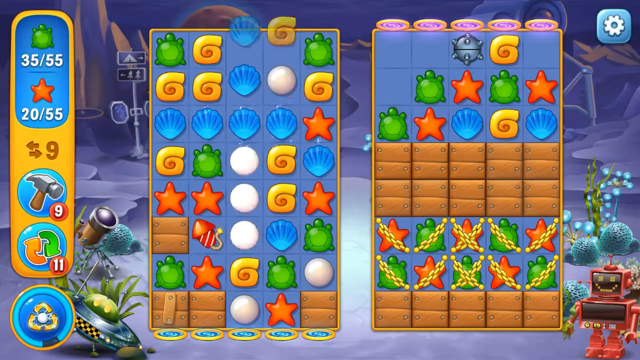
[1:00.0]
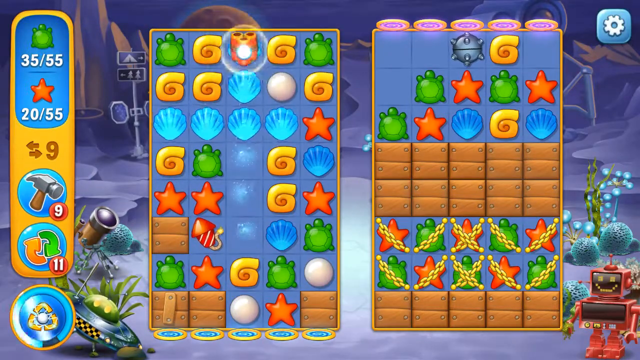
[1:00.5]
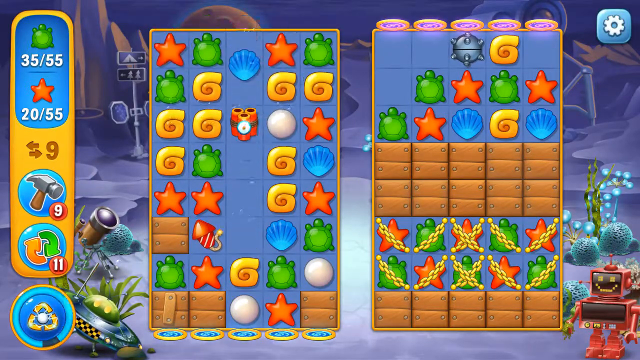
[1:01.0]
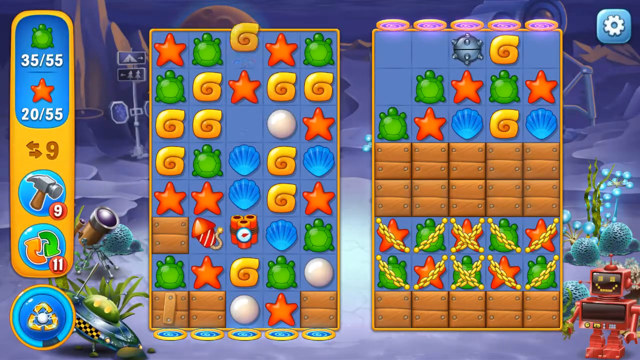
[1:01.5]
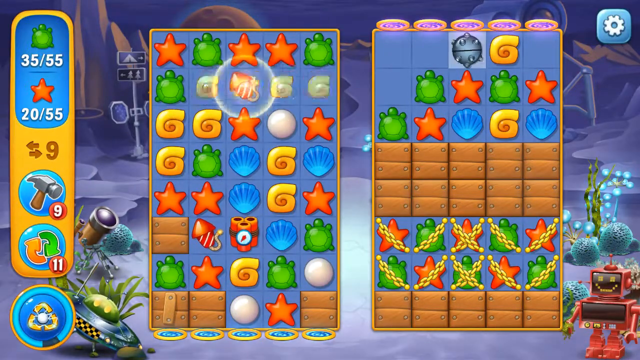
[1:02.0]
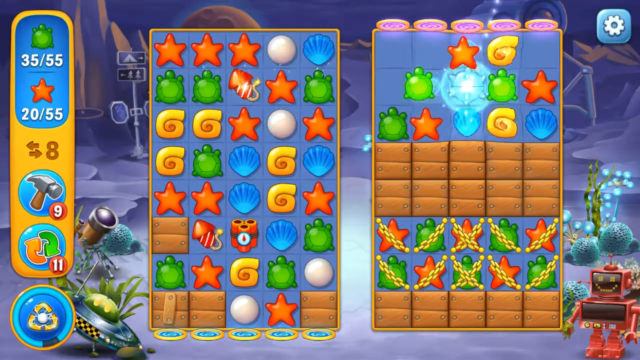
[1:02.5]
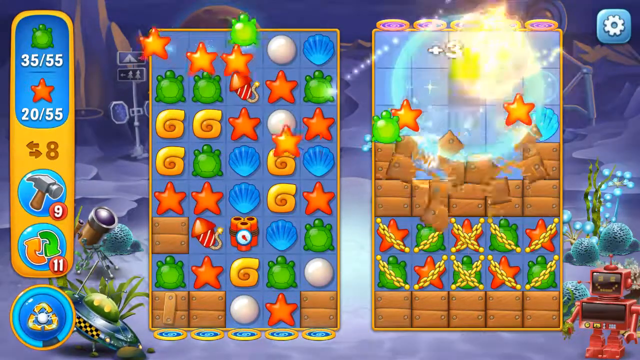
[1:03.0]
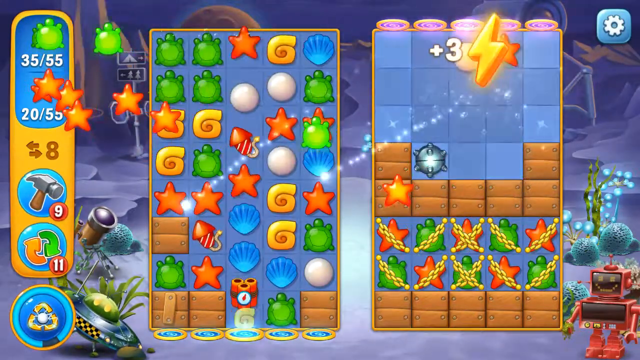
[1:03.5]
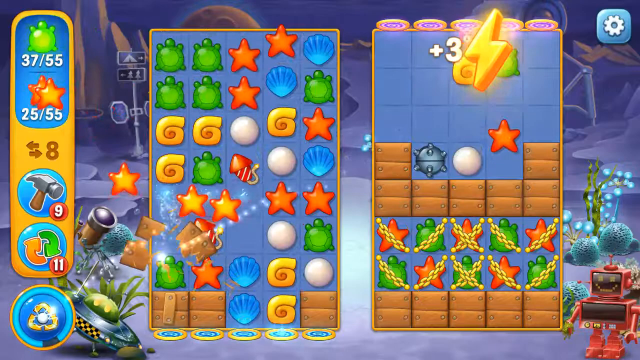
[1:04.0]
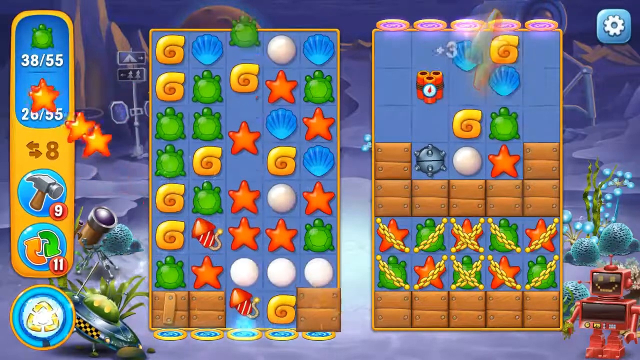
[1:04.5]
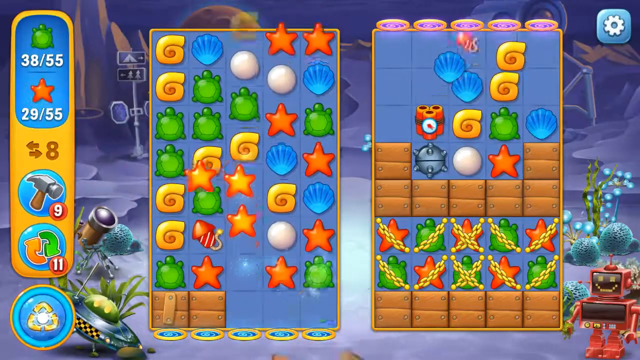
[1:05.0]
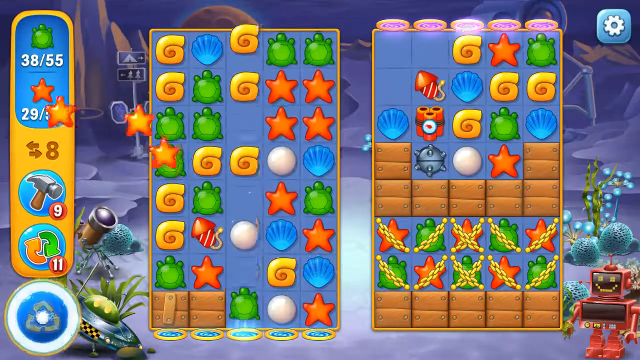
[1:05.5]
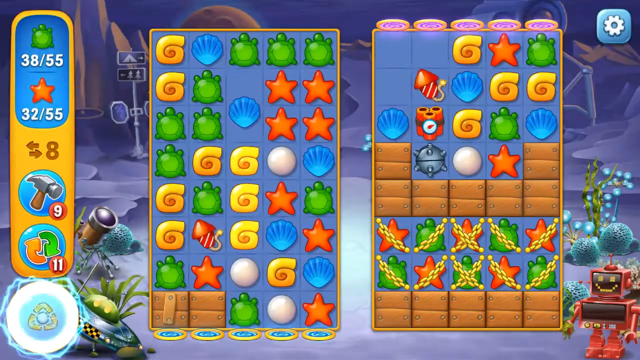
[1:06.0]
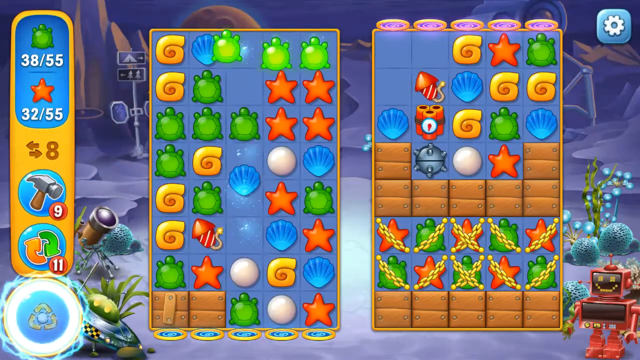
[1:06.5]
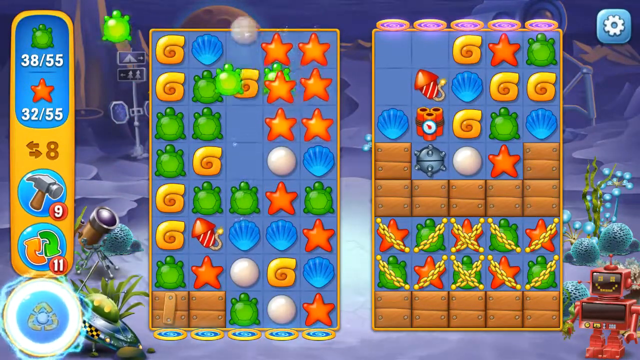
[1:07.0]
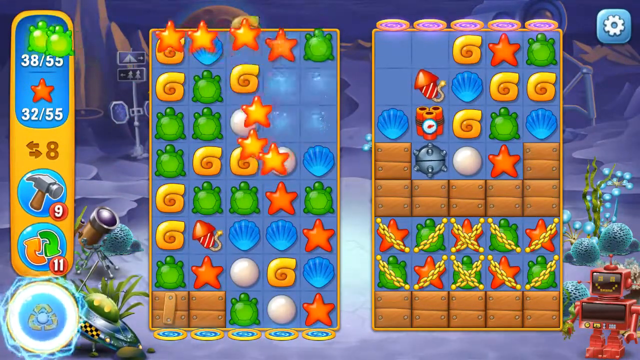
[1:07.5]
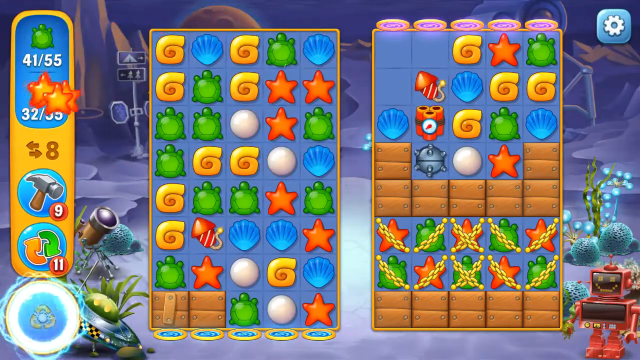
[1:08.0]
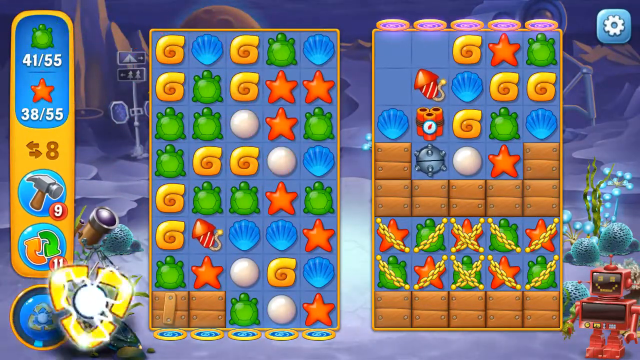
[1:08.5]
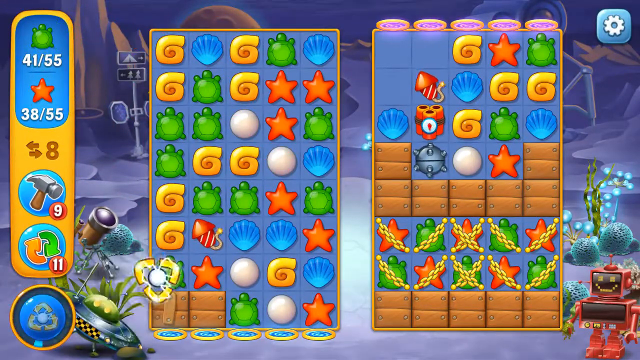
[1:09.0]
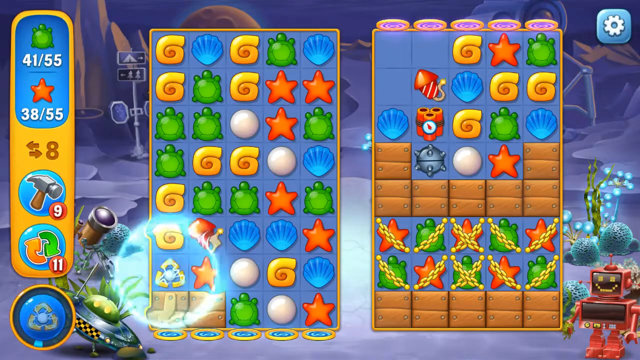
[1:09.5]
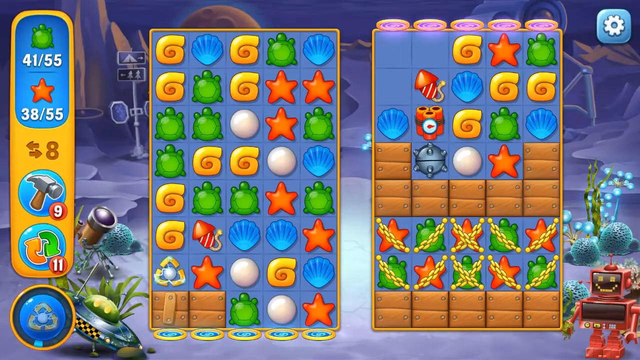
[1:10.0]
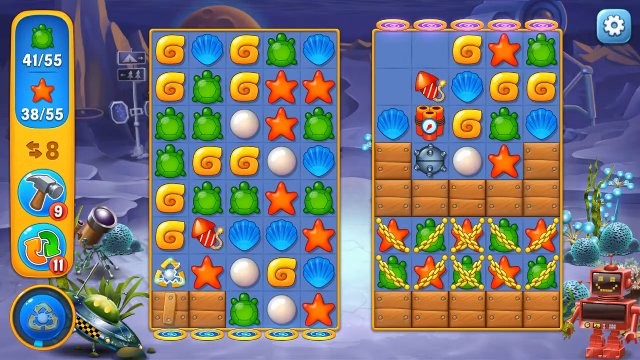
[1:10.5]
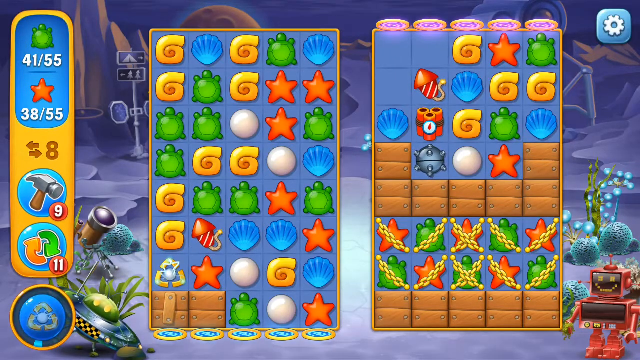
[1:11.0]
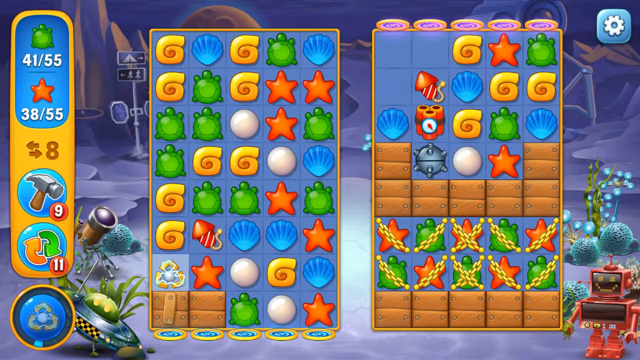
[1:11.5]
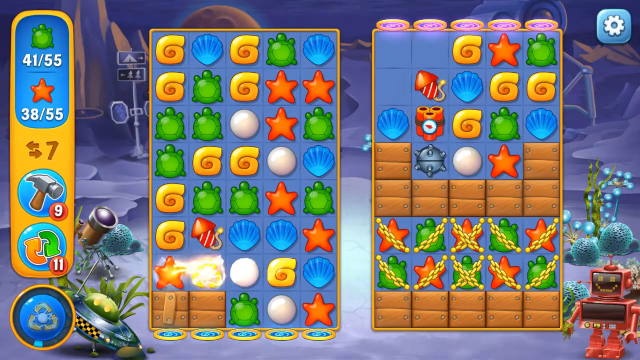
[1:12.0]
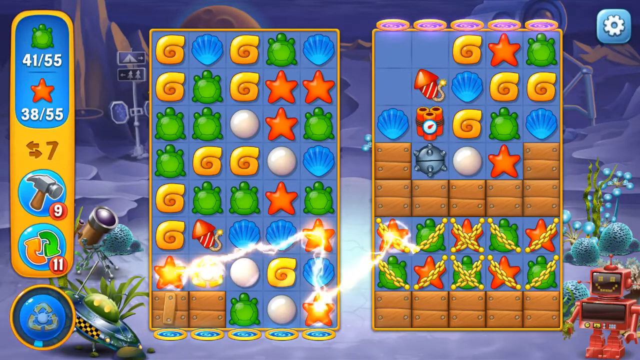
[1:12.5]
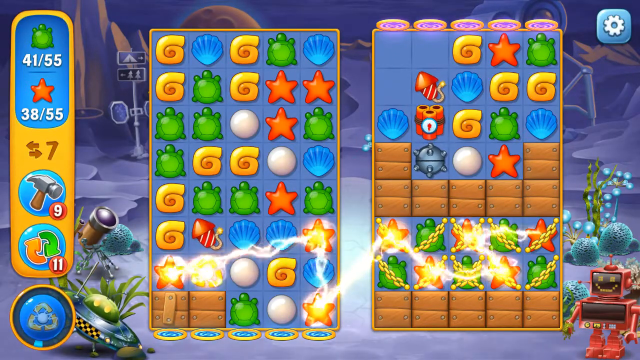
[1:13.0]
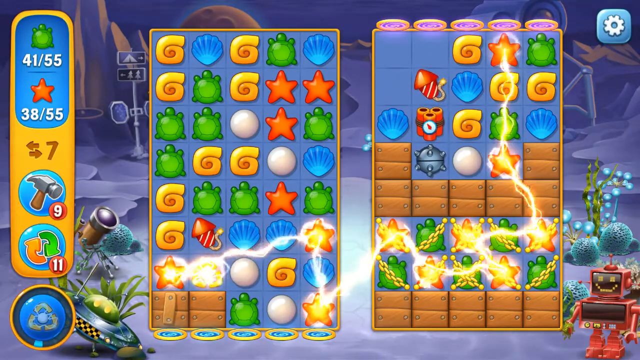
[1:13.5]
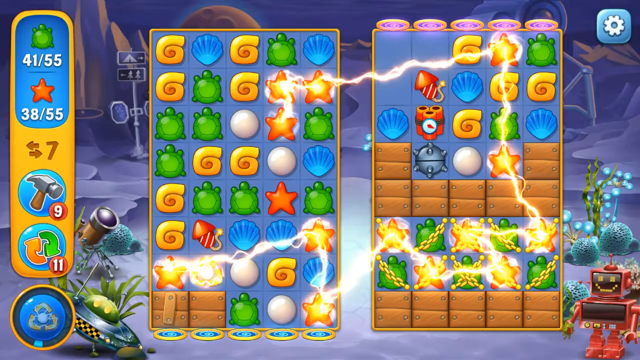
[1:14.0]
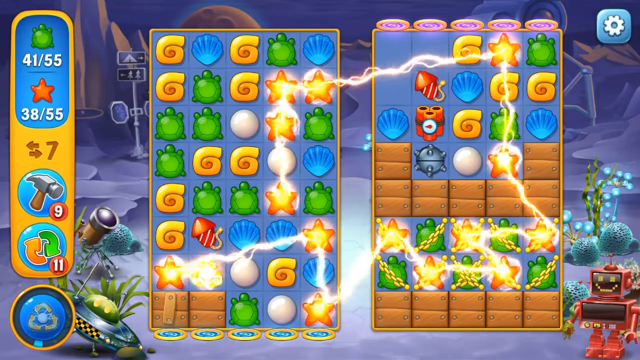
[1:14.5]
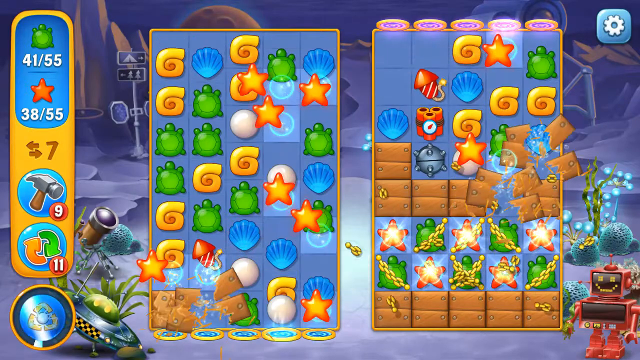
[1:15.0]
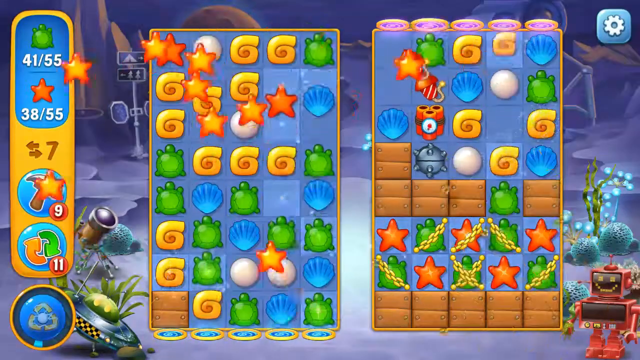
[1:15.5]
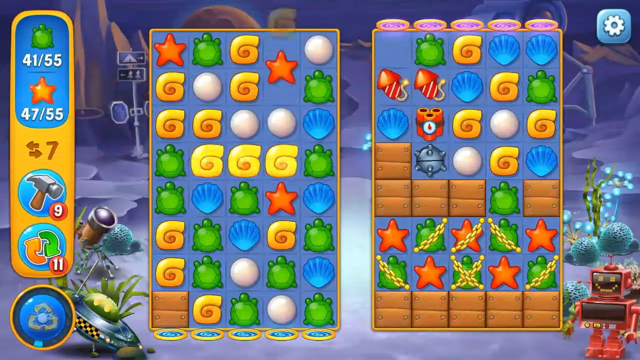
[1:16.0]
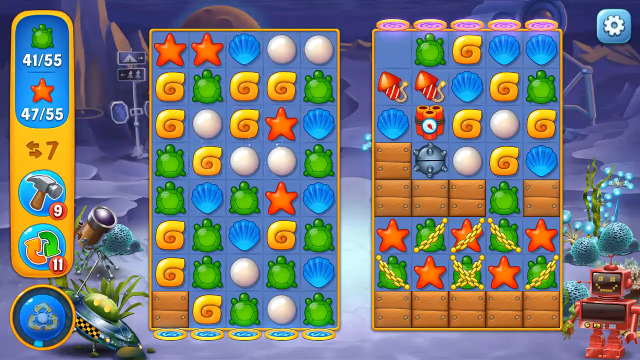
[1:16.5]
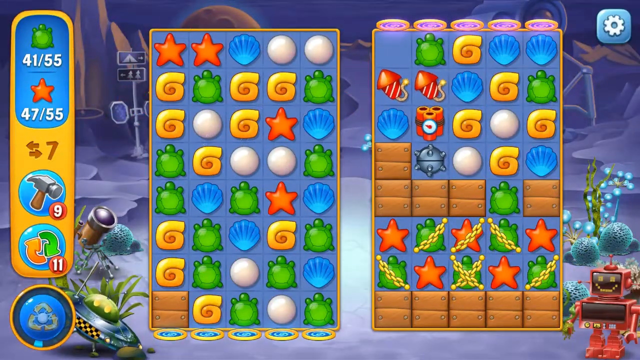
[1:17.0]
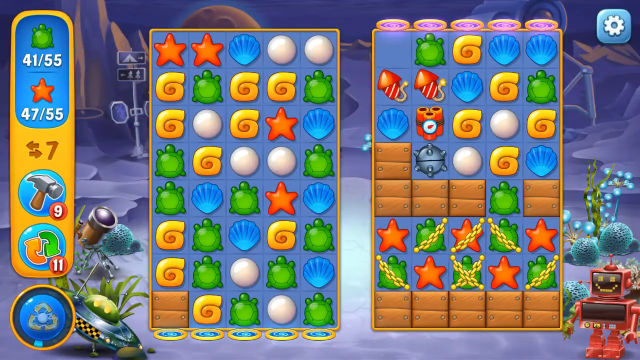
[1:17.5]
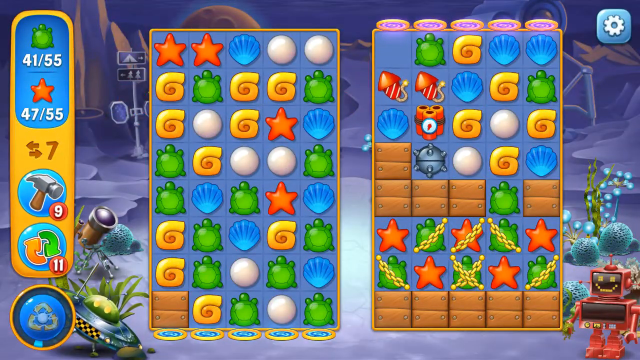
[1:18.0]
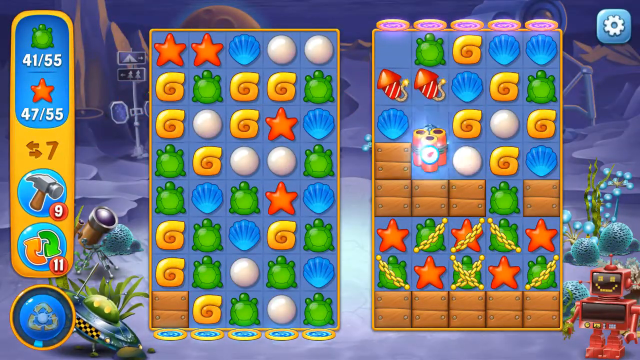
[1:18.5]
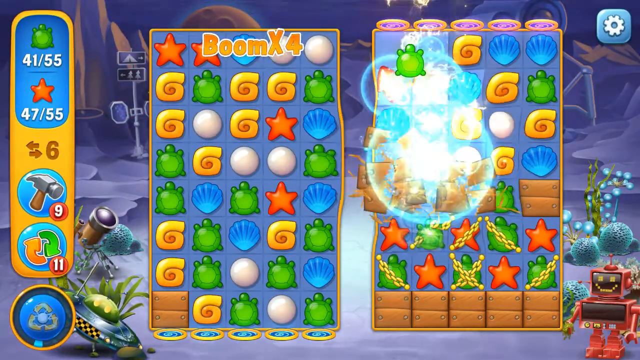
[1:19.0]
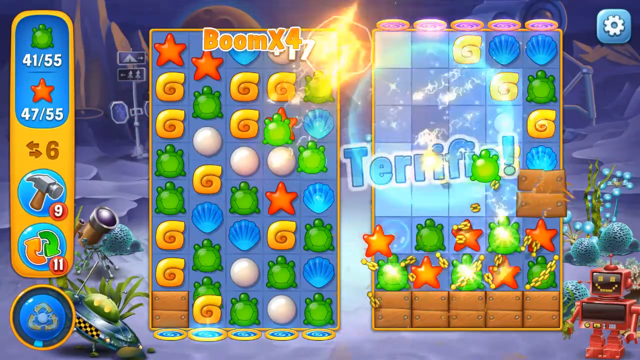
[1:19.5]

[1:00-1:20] The board holds shells, pearls, a green turtle and a starfish. On the left are some untouched boxes with a little bomb, and on the right are starfish and turtles with chains attached to them. A little game scorecard on the left reads 35 of 55 for the turtles and 20 of 55 for the stars, with 9 moves left, 9 hammers and 11 for the reshuffle board. The player makes moves and takes off a chunk of the blocks on the right side, and the star and turtle counts go up to 38 of 55 for the stars and 41 out of 55 for the turtles. They click the little recycle button in the bottom left corner and swap it with the orange star, which breaks all of the chains on the stars and some of the surrounding blocks. They then make a match that bombs a good majority of the board.